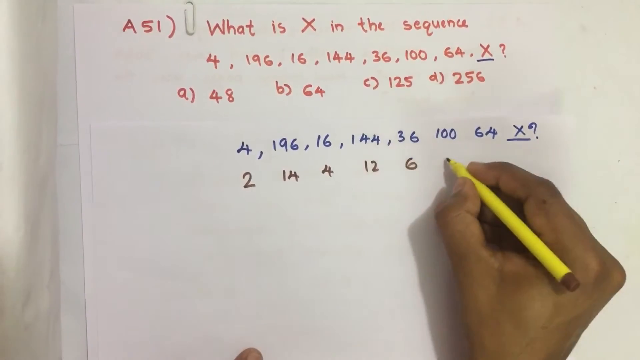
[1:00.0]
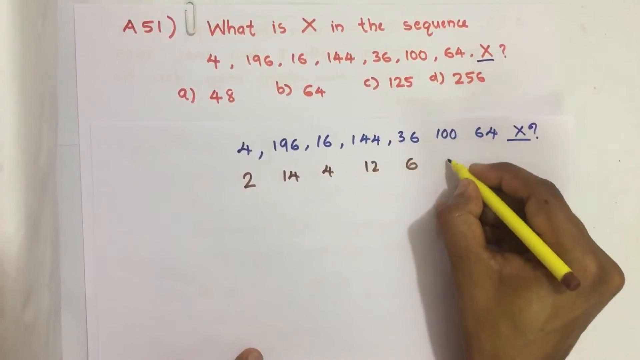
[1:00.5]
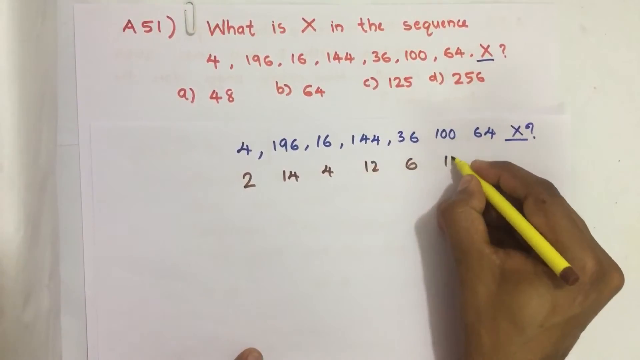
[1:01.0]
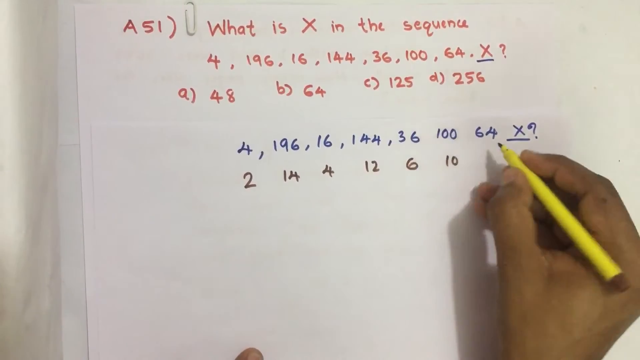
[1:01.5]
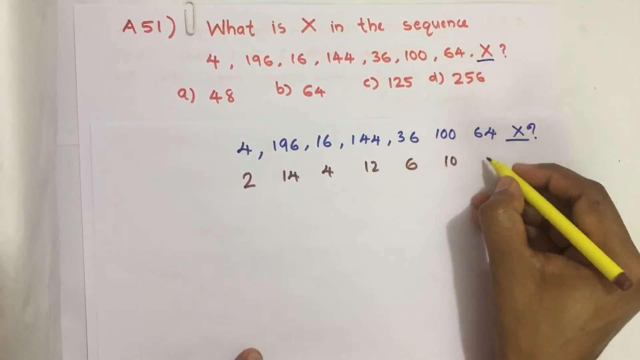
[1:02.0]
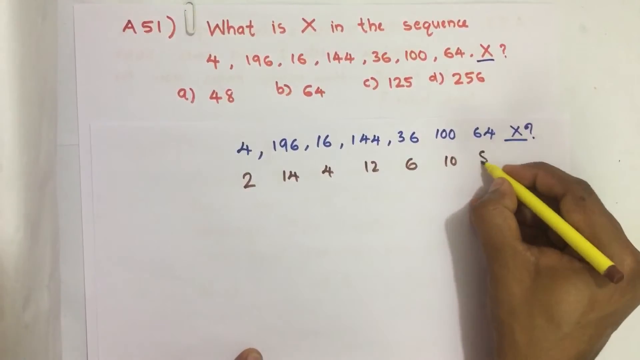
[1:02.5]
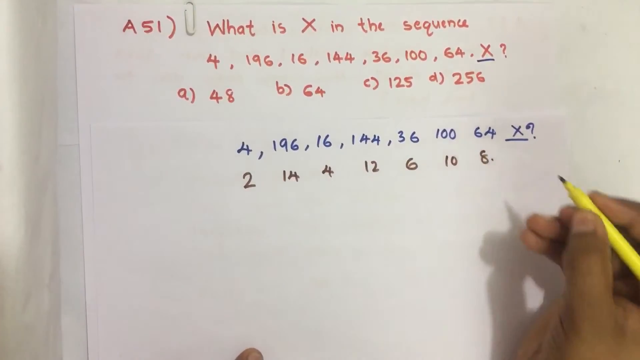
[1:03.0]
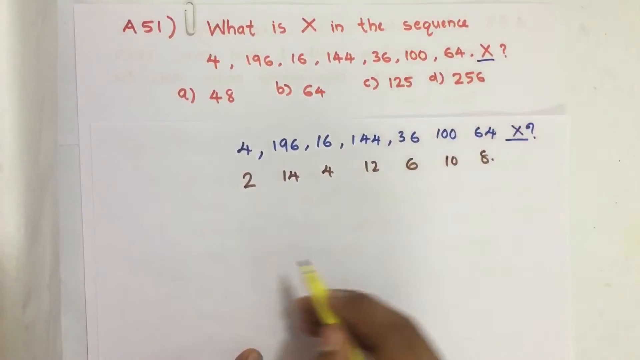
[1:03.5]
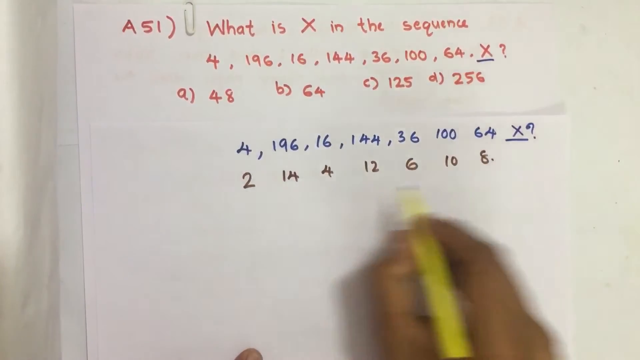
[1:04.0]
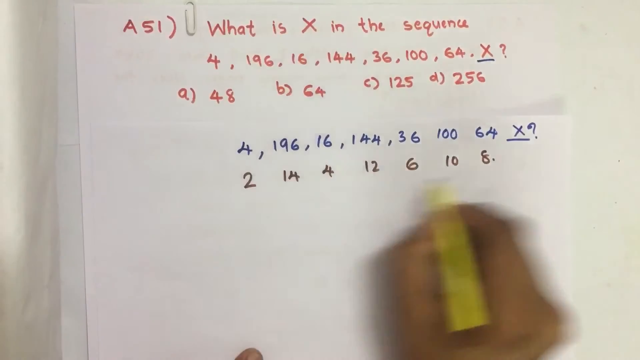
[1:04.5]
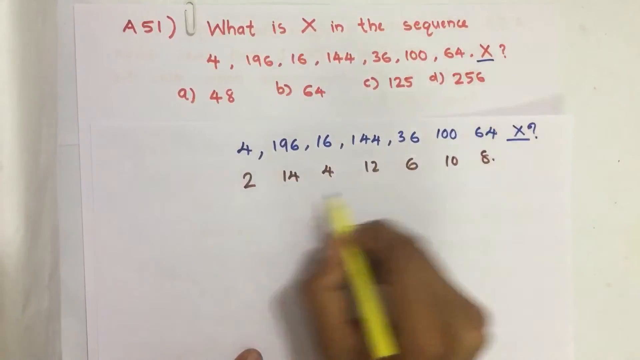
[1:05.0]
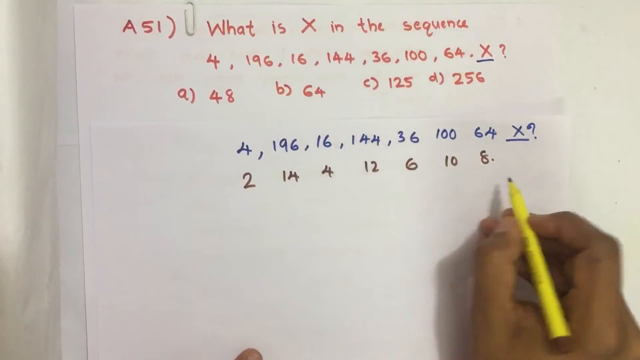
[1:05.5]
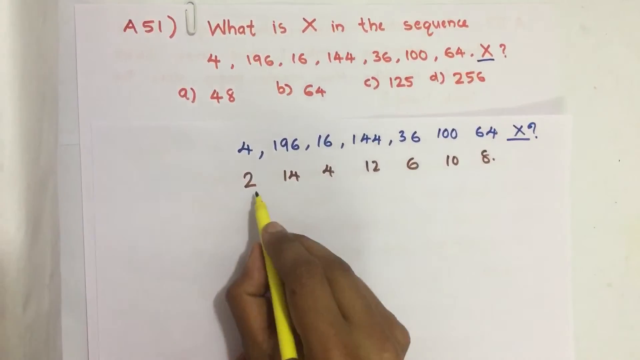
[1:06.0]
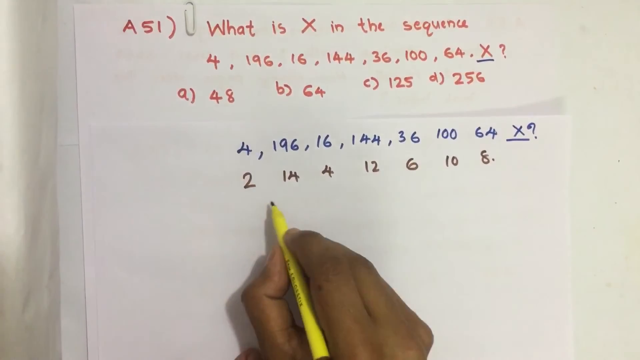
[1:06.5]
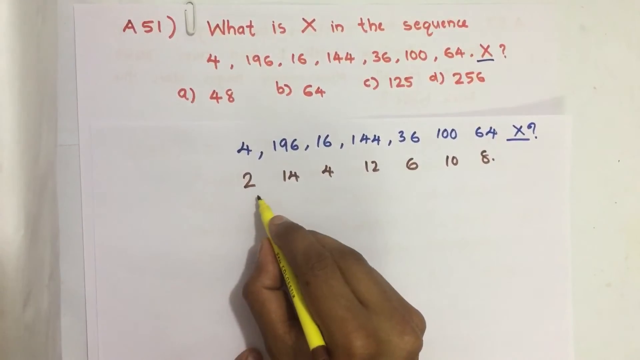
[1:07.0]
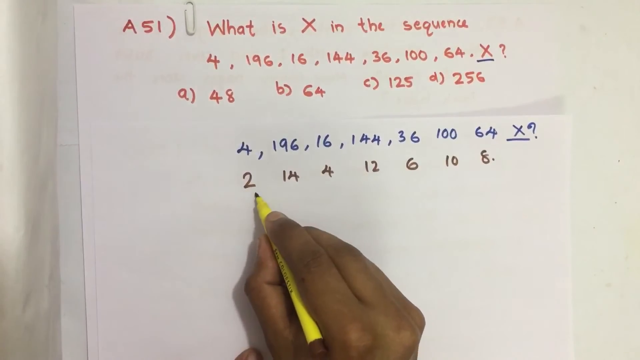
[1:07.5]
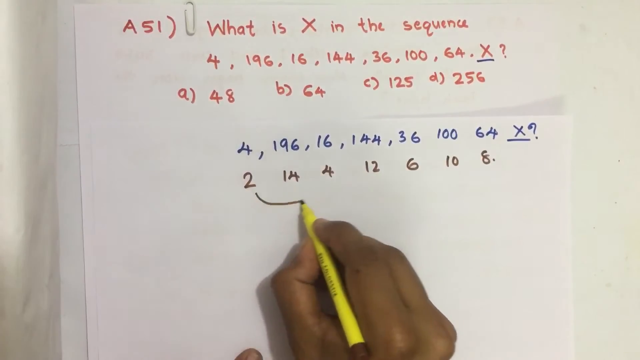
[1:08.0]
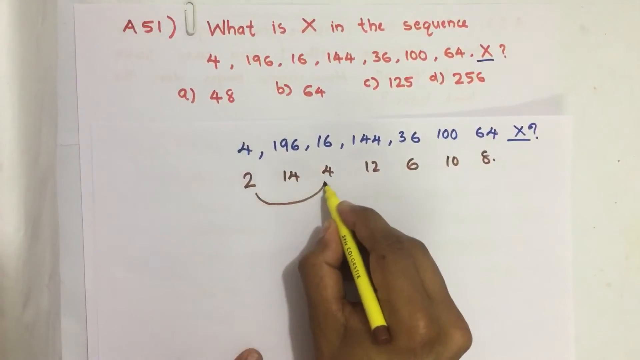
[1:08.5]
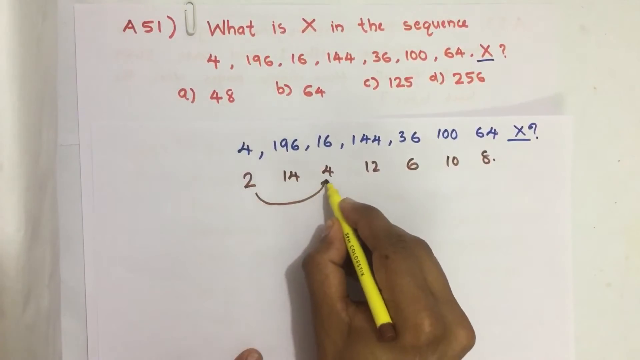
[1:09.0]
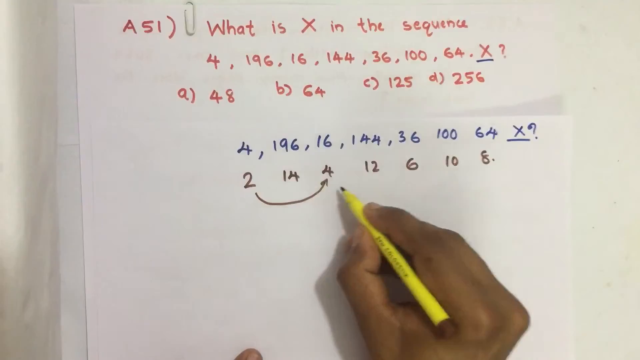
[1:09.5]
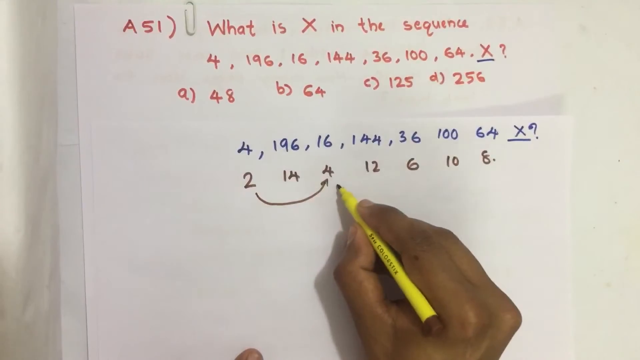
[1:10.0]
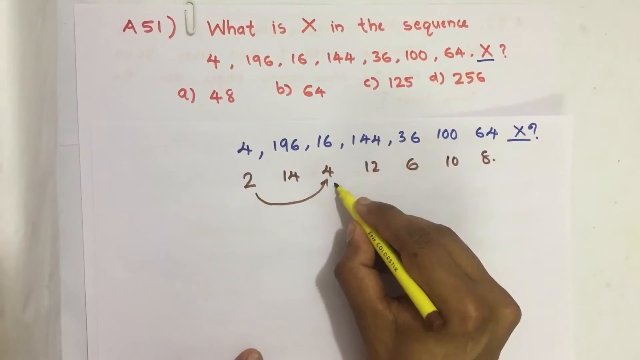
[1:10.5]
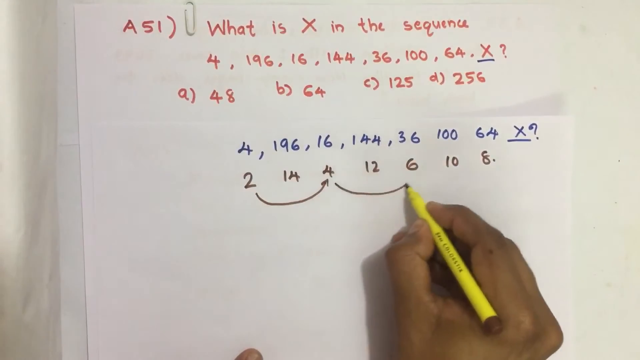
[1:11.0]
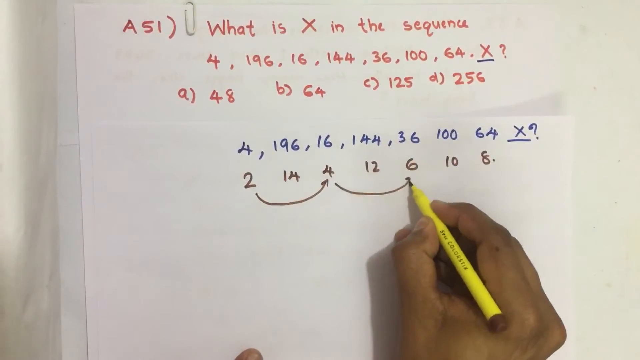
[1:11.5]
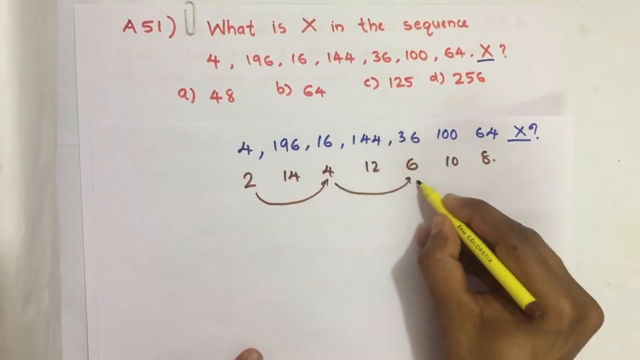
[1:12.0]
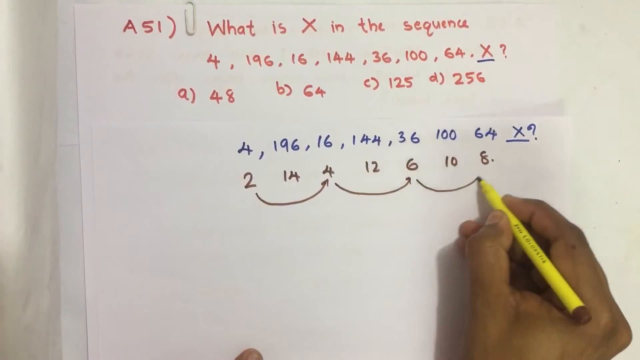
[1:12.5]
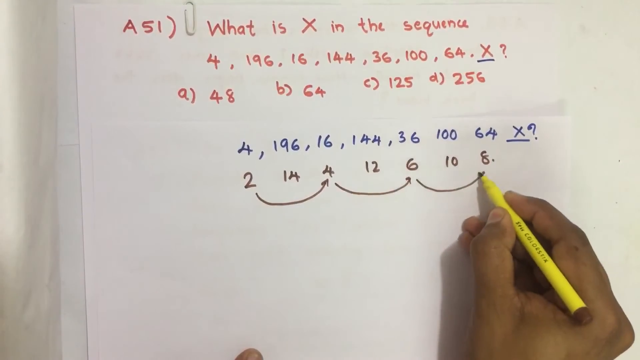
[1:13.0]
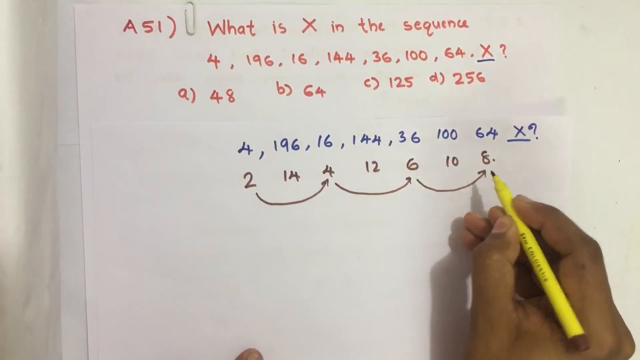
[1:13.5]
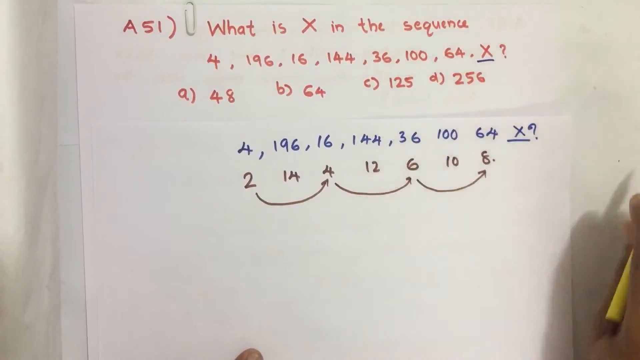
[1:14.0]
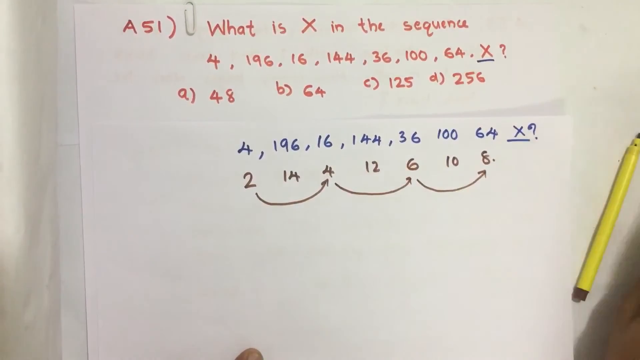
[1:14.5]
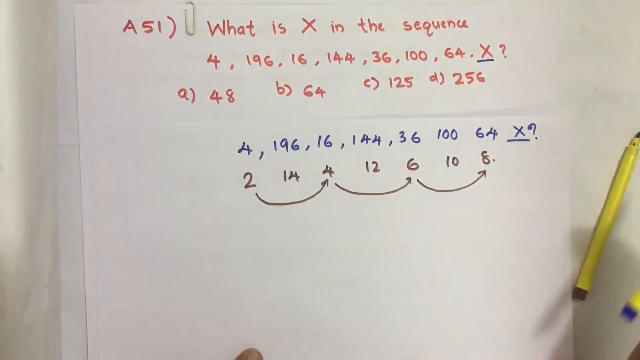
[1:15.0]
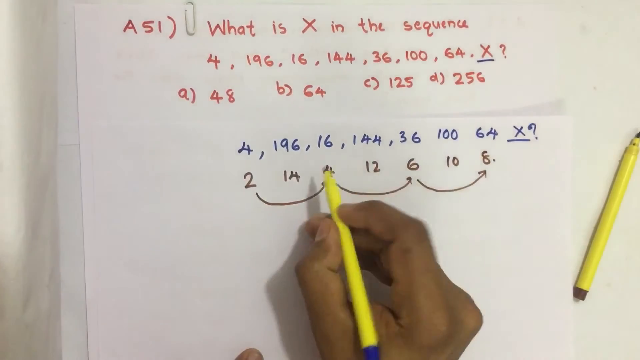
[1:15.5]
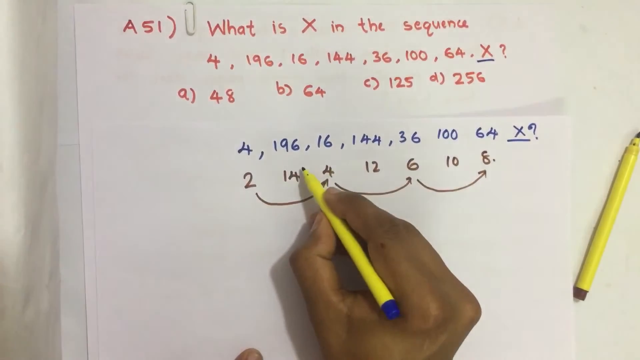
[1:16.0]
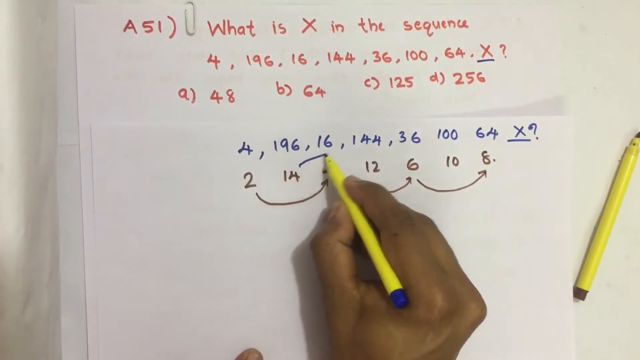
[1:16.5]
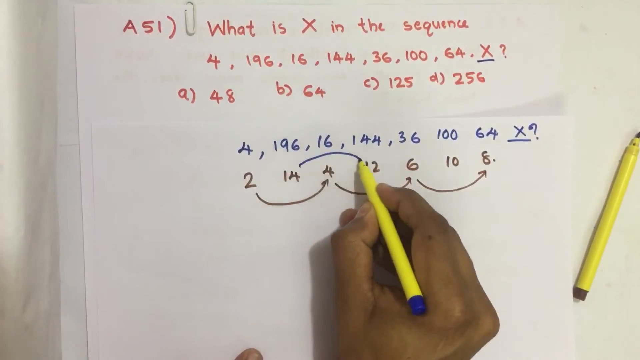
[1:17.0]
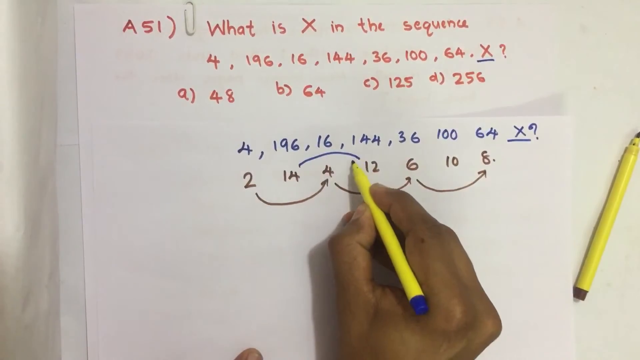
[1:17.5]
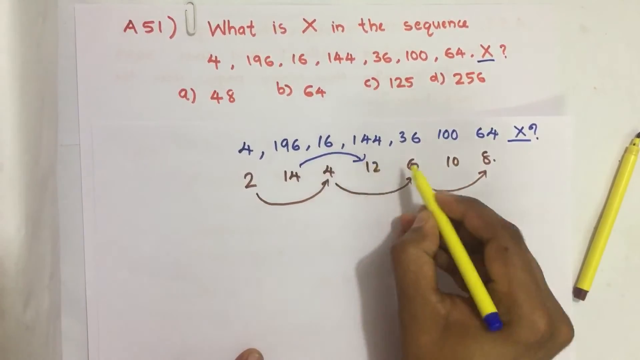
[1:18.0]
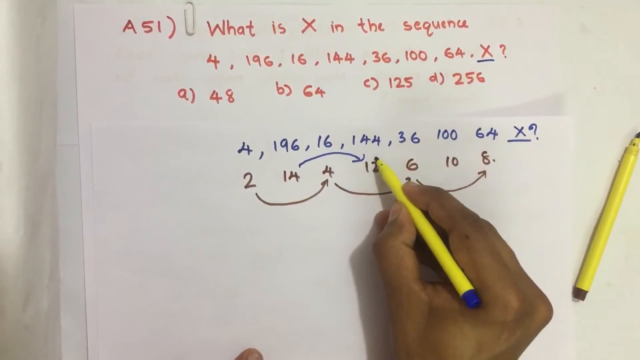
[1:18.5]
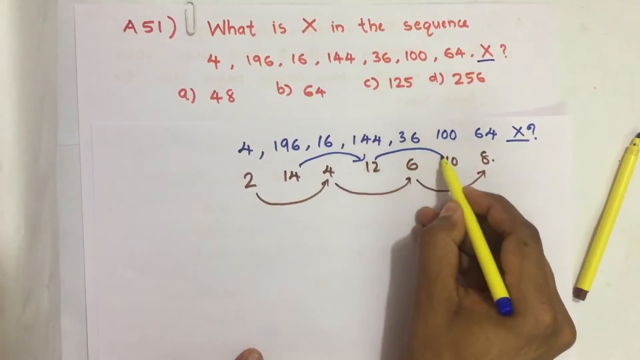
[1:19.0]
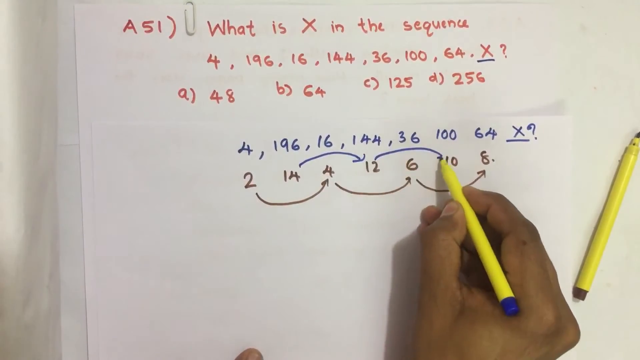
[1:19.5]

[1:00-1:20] The white piece of paper with the small paper clip at the top shows the problem in red and the sequence written in blue pen. The square roots appear to be worked out in a different color, maybe pencil; the instrument has yellow on it and what looks like a red tip. The person writes 10 for 100 and 8 for 64, then looks for the pattern, which appears to be that every other number goes up by two and every other number goes down by two.